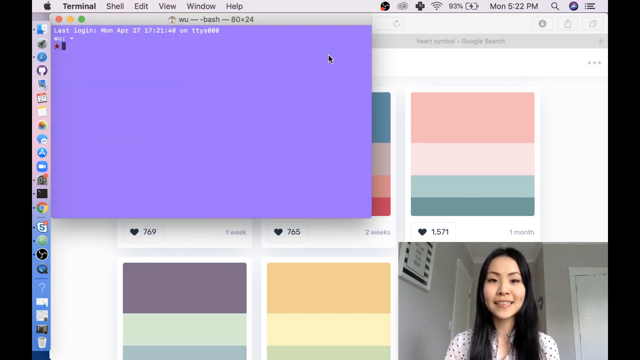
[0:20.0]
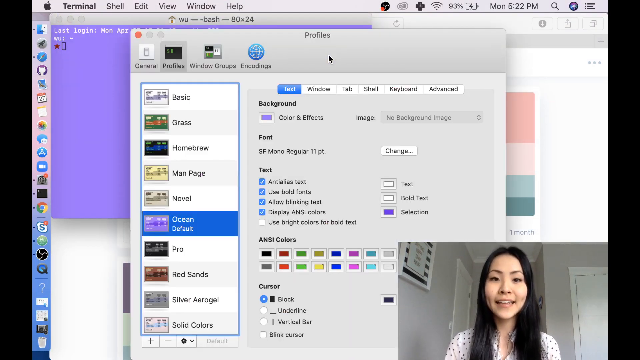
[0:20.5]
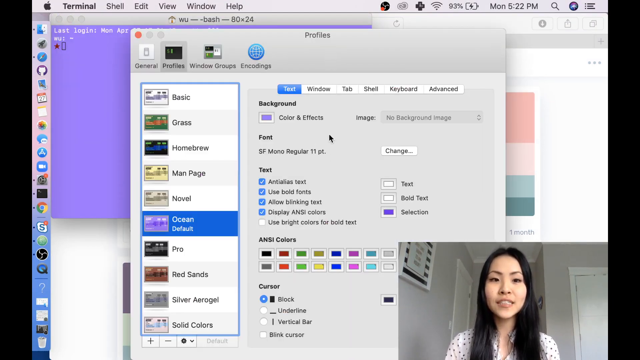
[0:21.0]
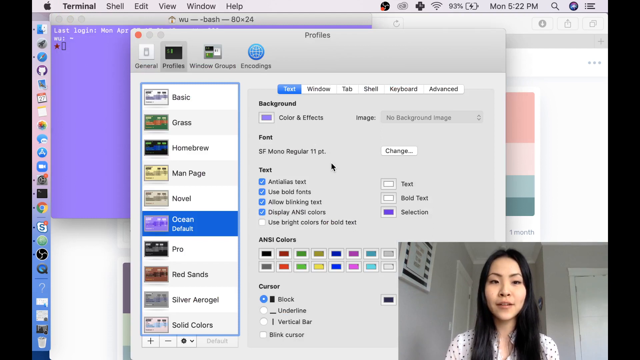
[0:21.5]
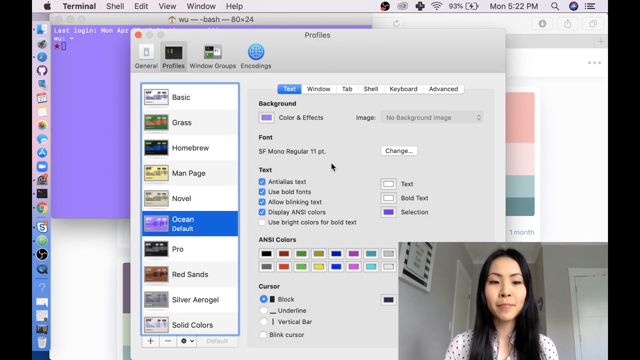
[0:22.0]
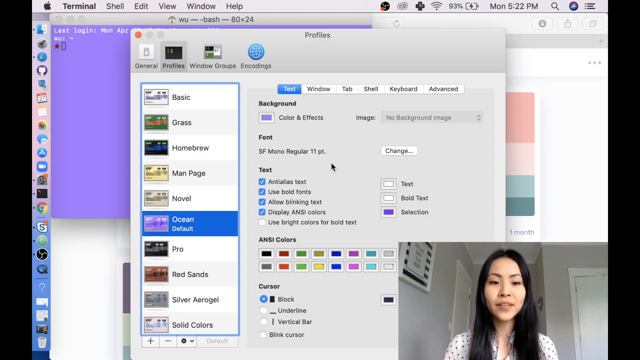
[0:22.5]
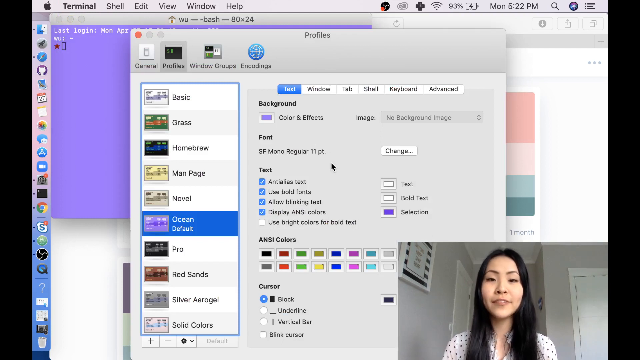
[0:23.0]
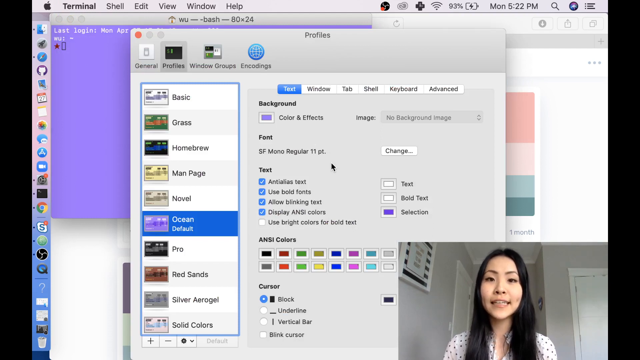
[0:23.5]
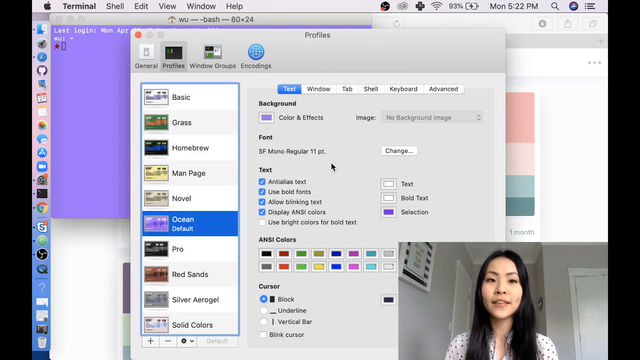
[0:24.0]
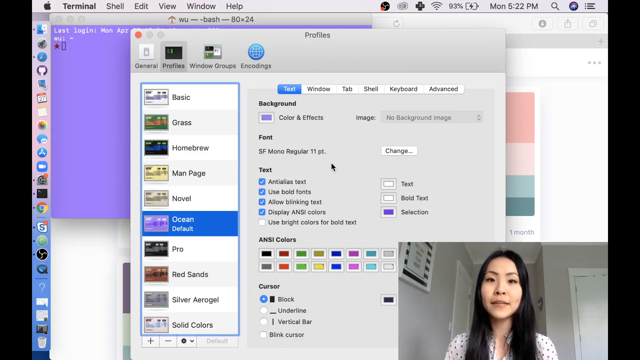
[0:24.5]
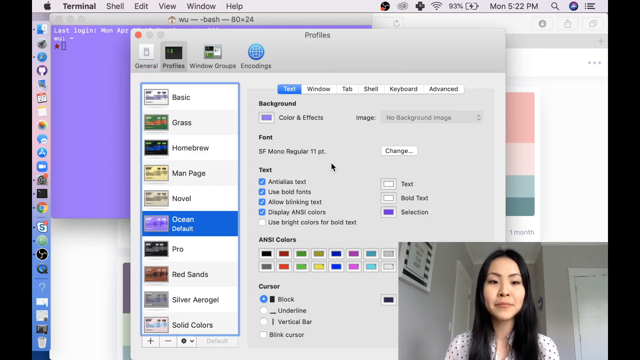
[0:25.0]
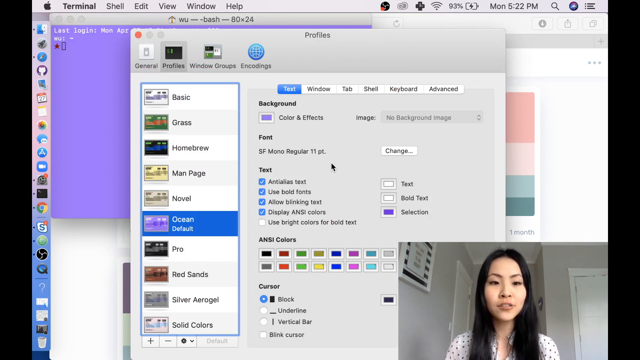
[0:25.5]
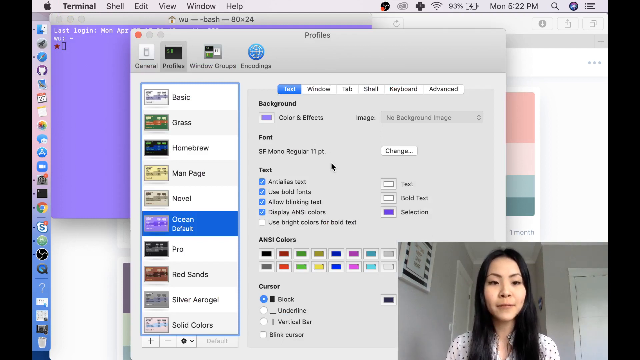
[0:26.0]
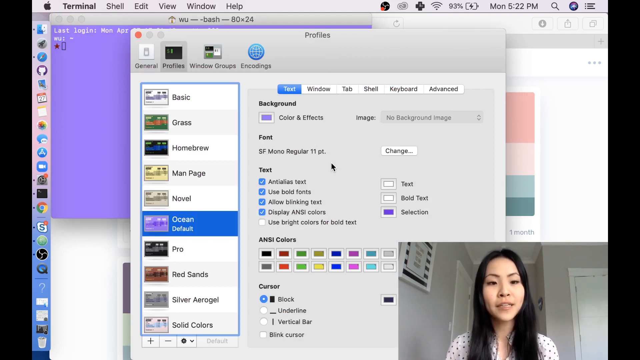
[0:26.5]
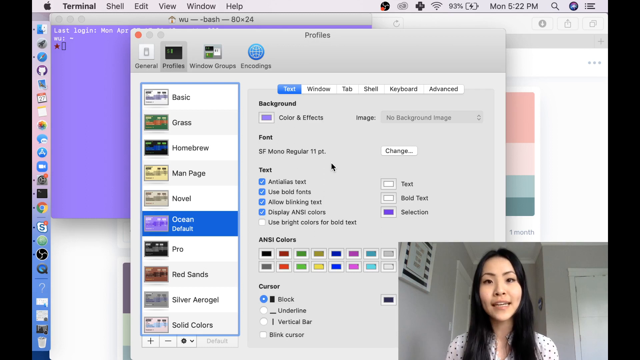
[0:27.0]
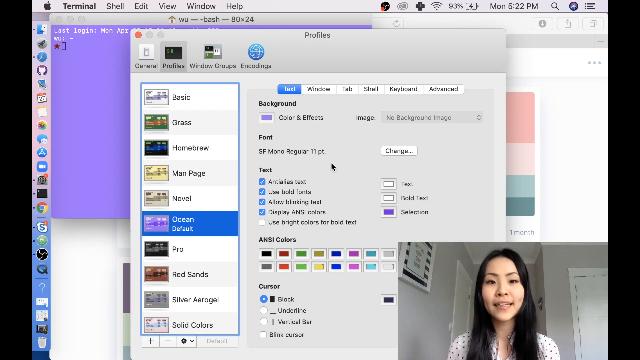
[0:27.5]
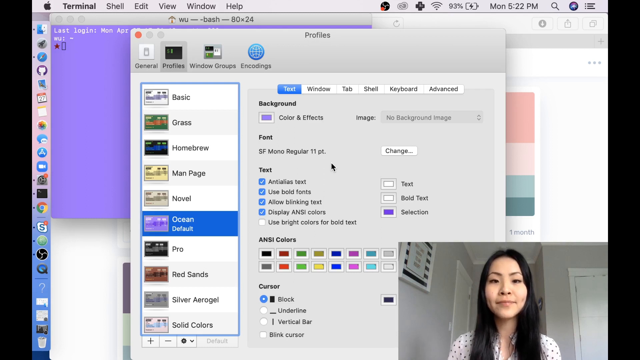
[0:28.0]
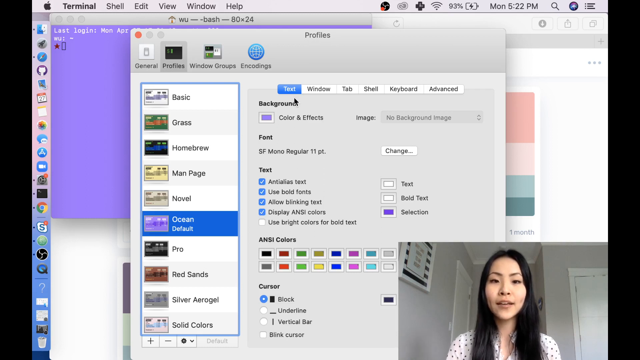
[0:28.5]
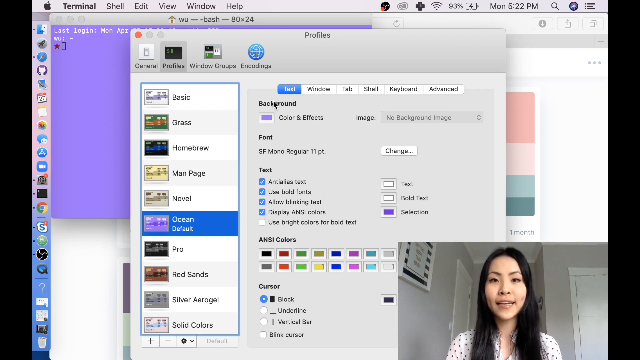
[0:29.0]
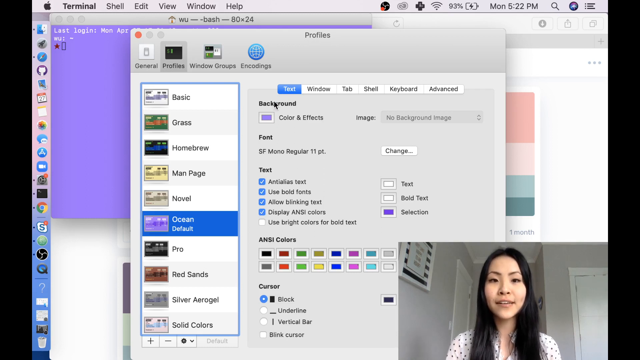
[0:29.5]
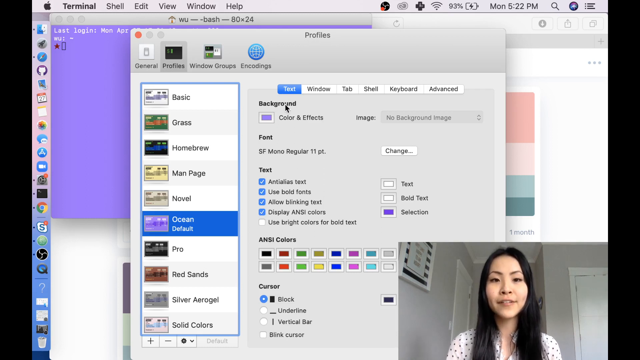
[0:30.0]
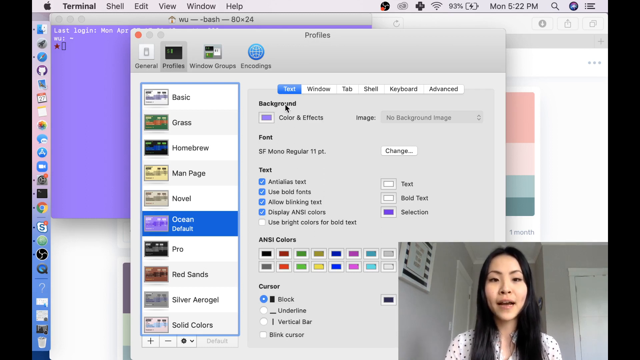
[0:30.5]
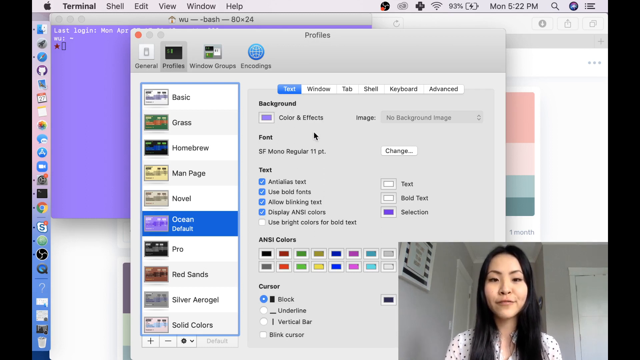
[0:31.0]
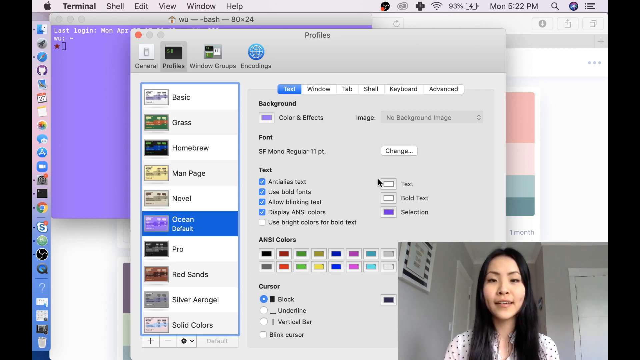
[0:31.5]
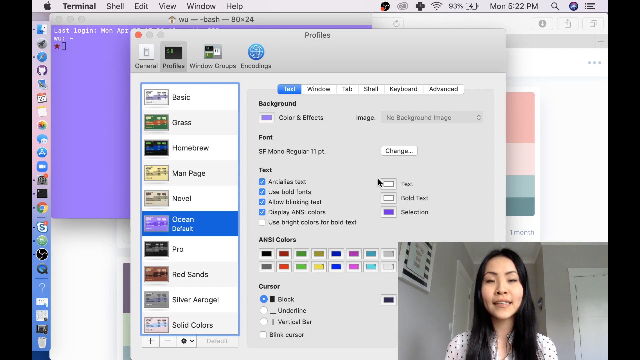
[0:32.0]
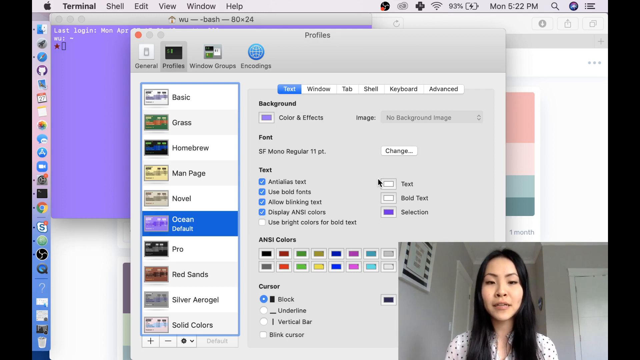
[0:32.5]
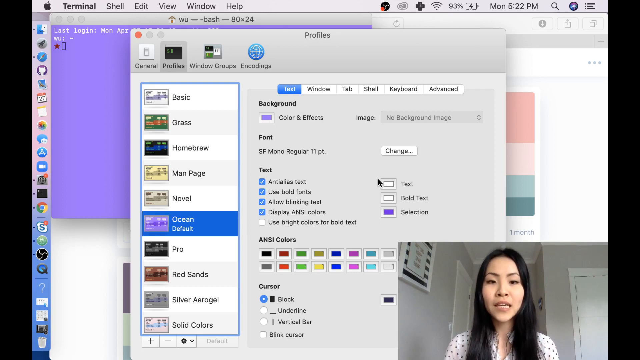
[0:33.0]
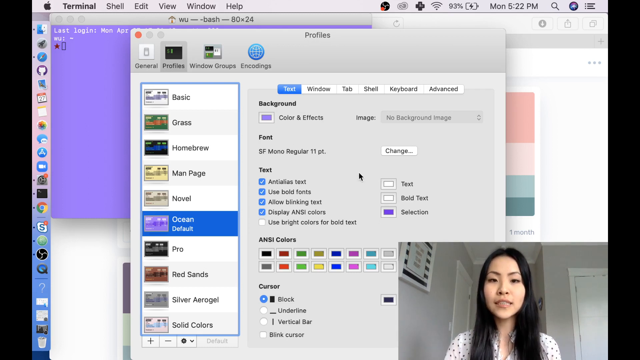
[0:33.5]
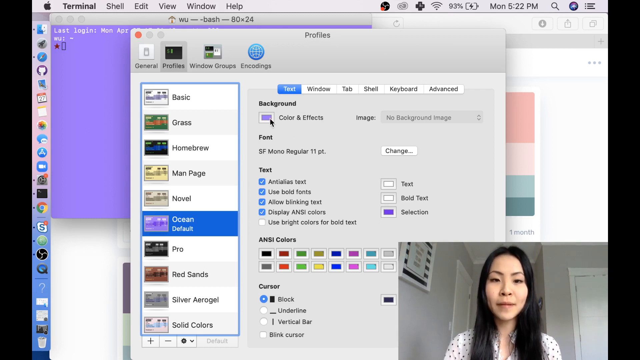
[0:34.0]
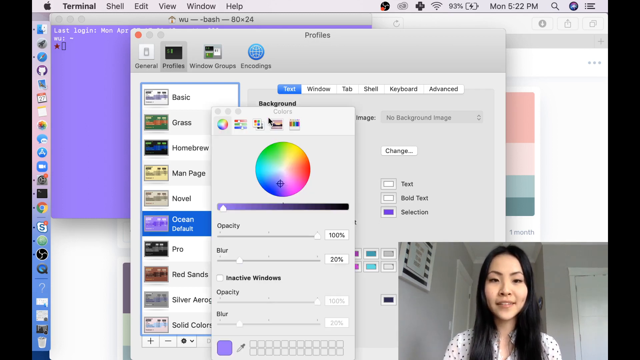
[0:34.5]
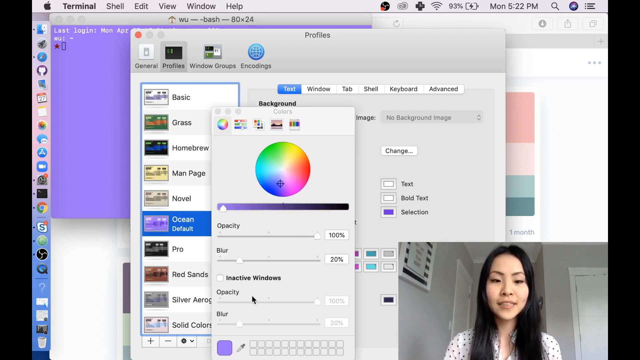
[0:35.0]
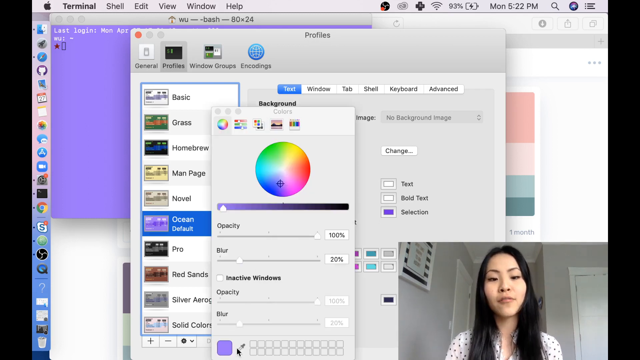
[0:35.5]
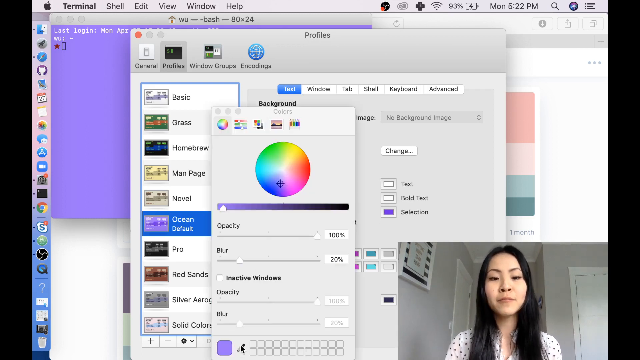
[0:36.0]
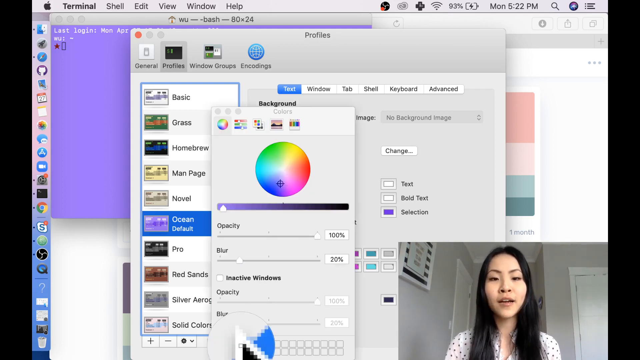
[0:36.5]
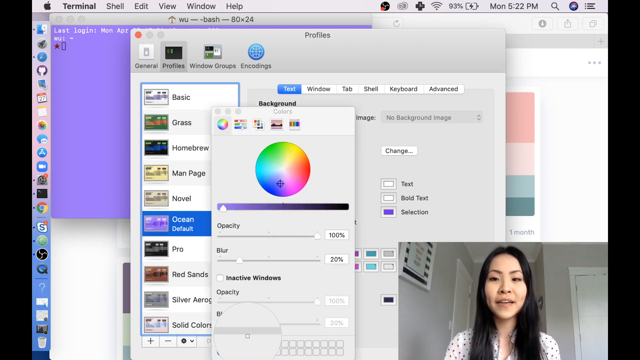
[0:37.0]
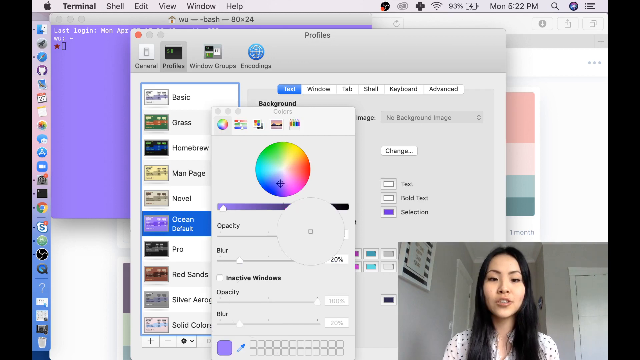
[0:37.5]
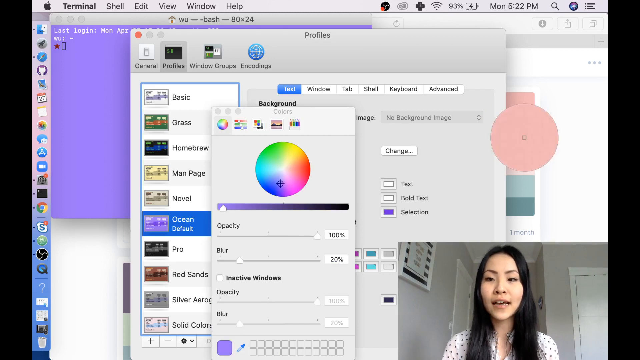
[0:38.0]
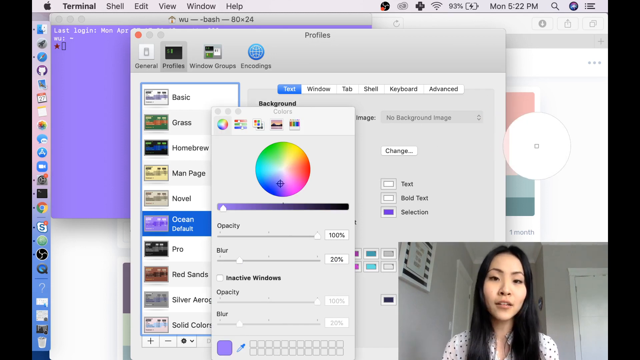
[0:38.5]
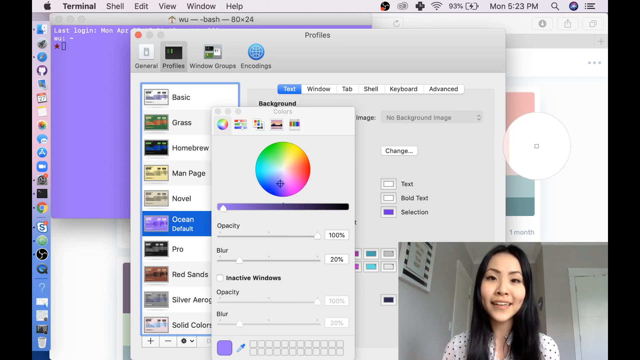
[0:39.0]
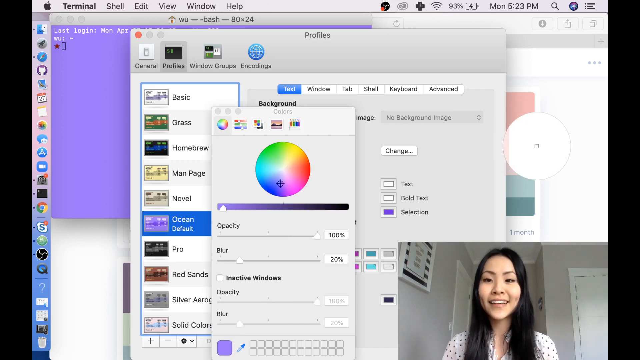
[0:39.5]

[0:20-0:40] A girl appears in the bottom right-hand section of the screen; she appears to be of East Asian descent, with yellowish skin and black hair. She talks directly to the screen while various color changes and color schematics are shown as part of the tutorial.